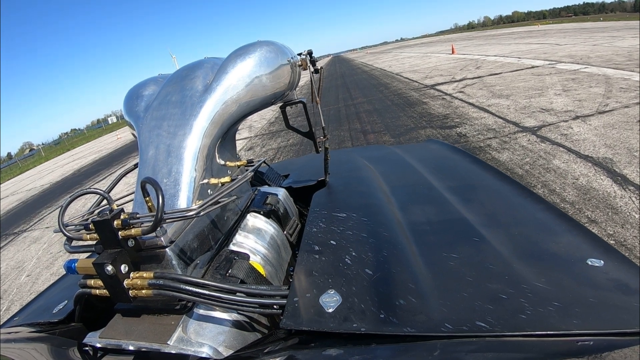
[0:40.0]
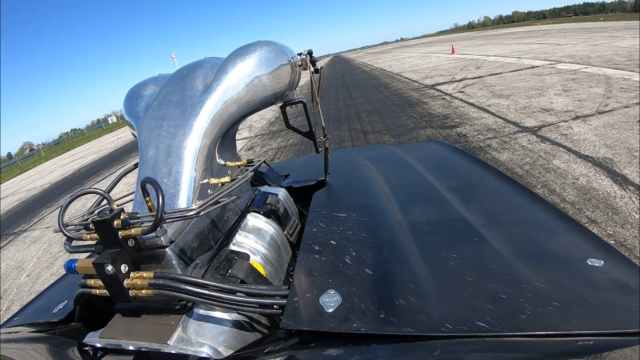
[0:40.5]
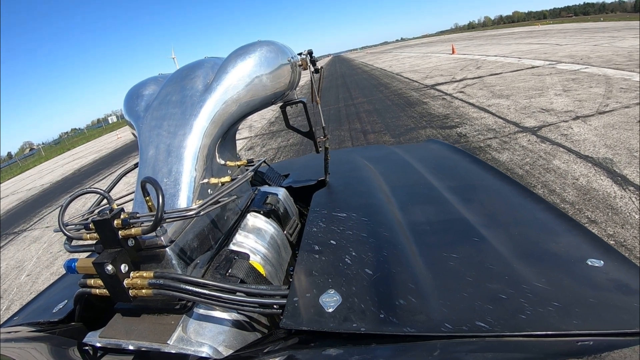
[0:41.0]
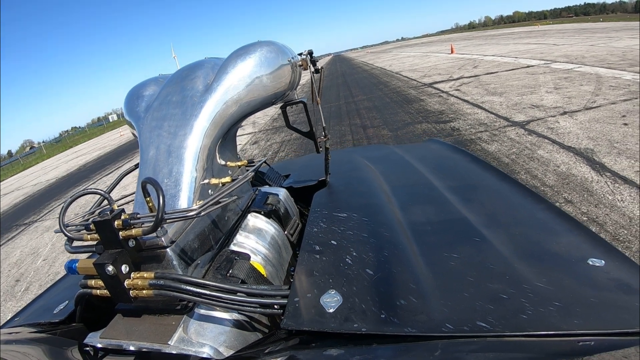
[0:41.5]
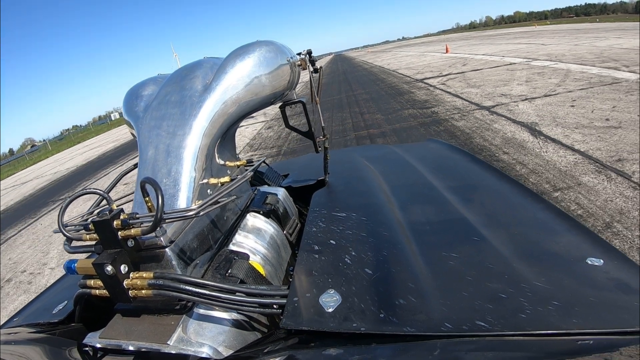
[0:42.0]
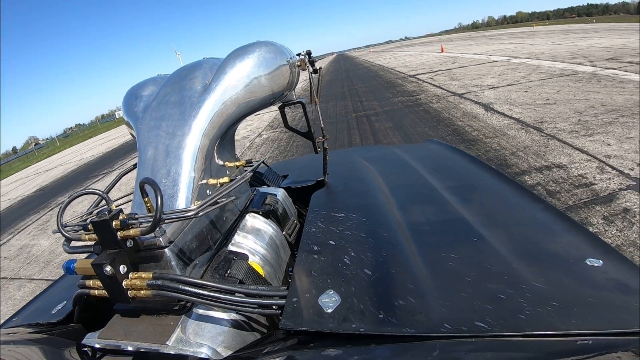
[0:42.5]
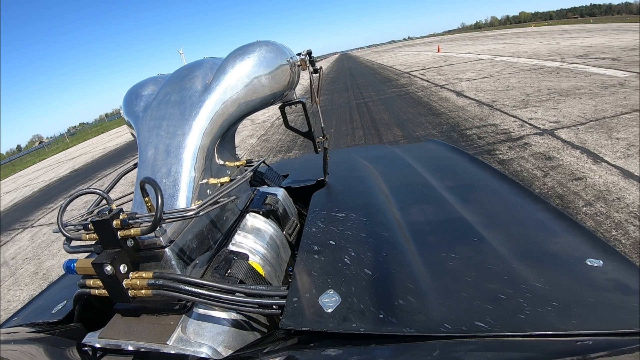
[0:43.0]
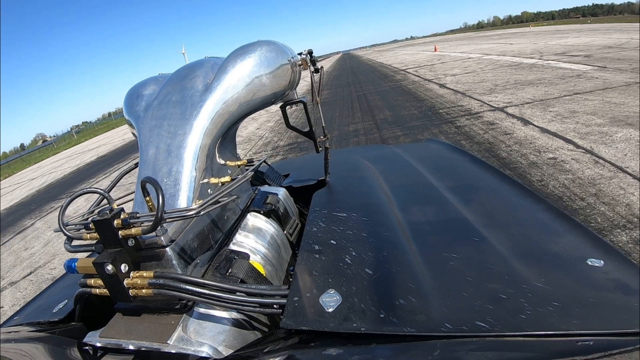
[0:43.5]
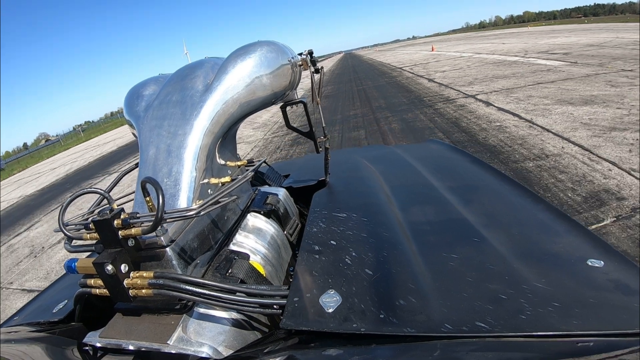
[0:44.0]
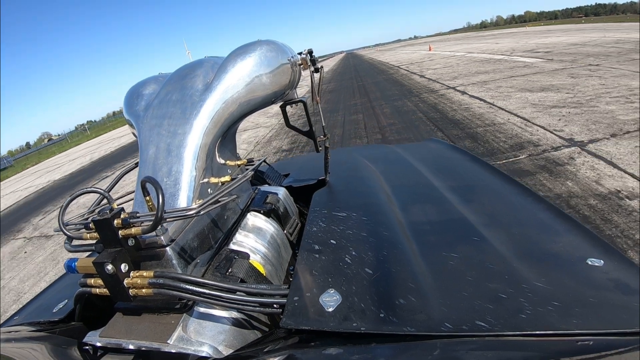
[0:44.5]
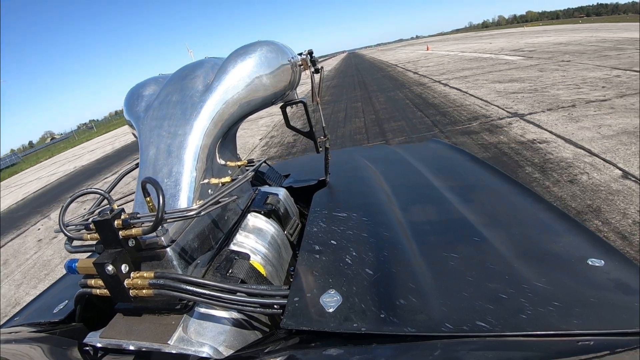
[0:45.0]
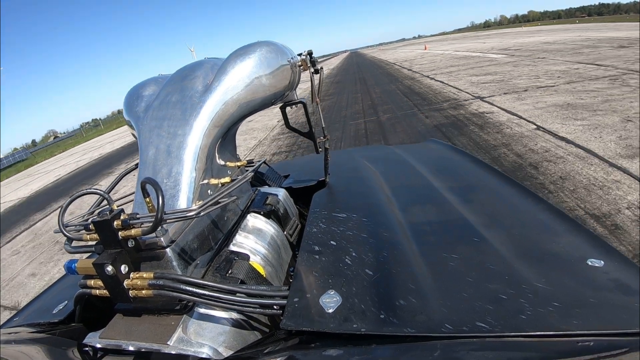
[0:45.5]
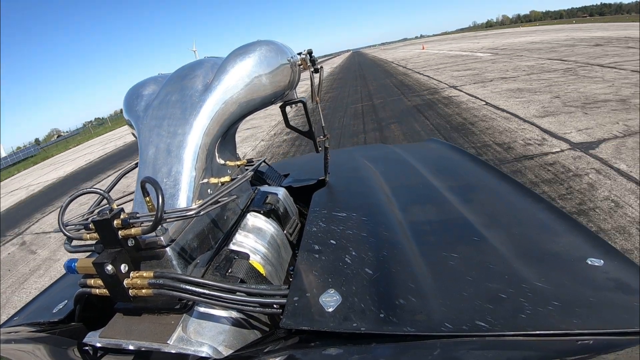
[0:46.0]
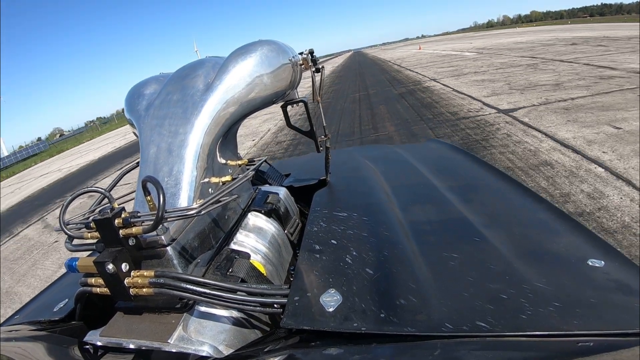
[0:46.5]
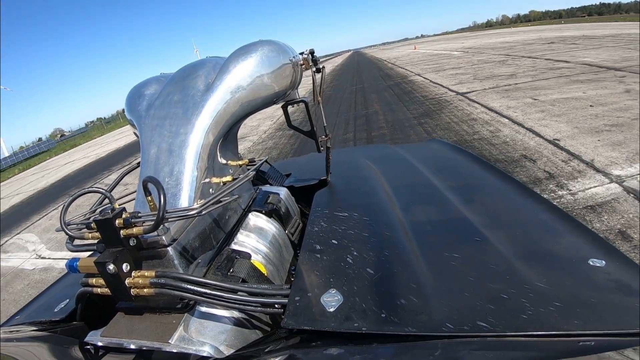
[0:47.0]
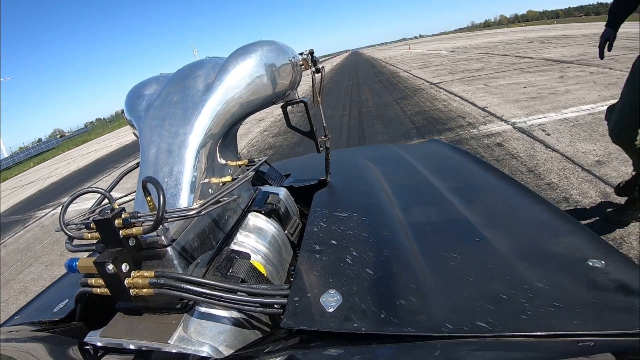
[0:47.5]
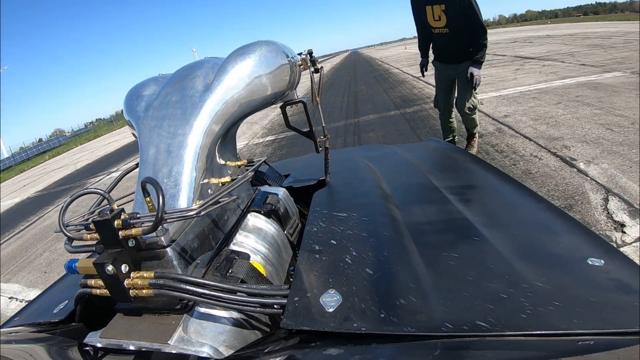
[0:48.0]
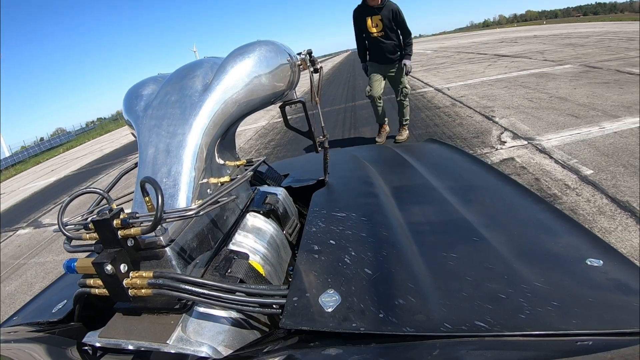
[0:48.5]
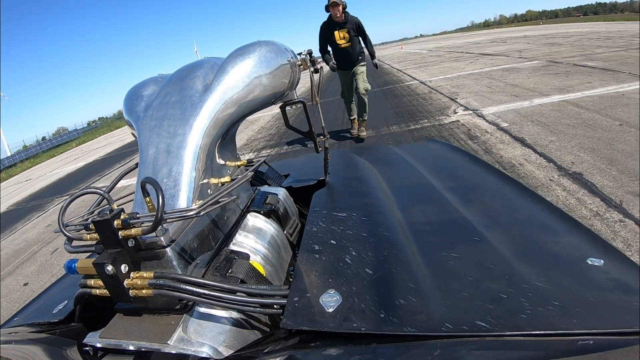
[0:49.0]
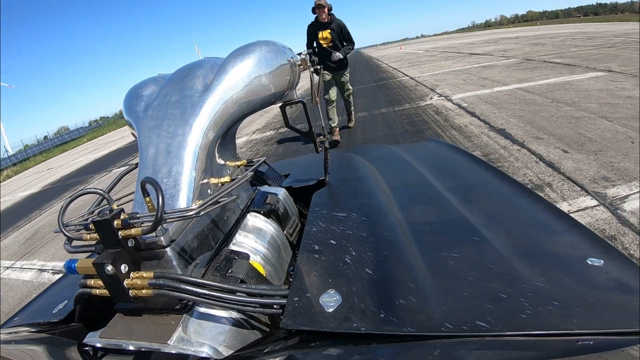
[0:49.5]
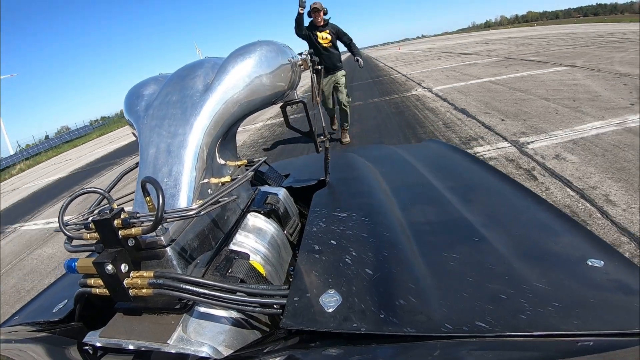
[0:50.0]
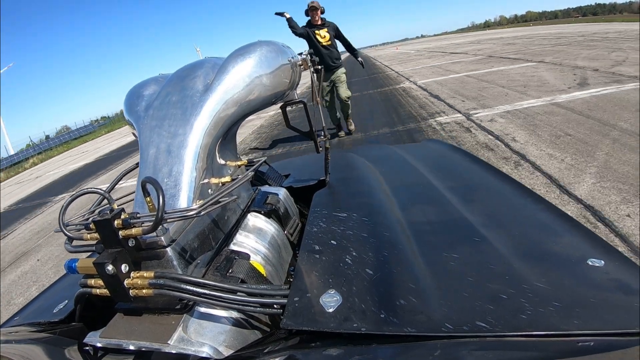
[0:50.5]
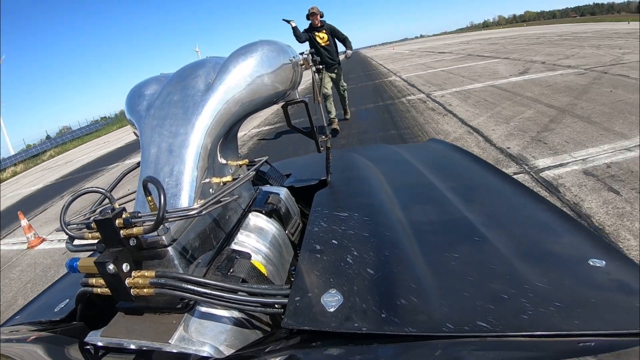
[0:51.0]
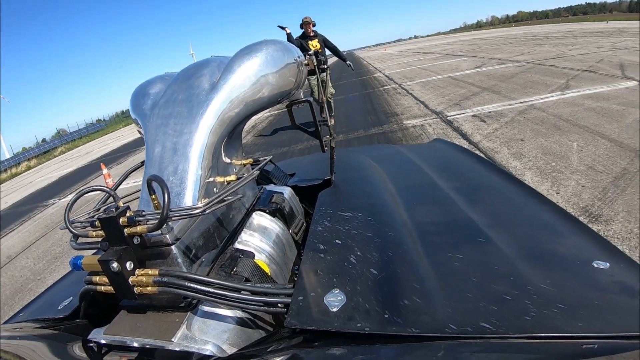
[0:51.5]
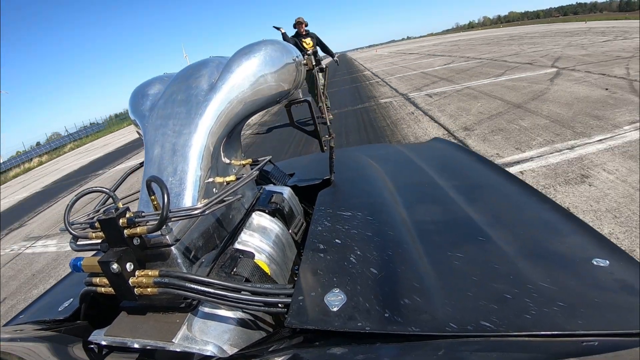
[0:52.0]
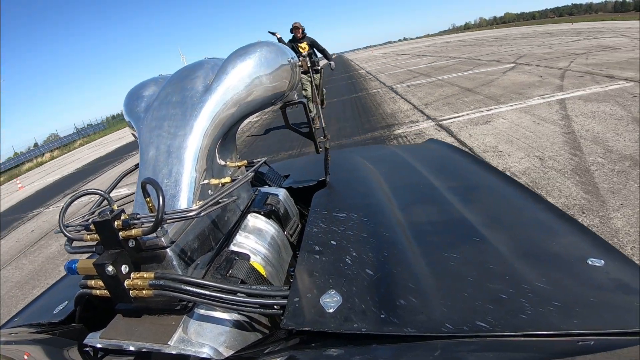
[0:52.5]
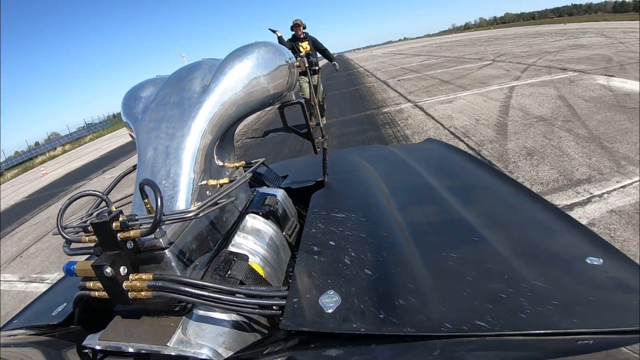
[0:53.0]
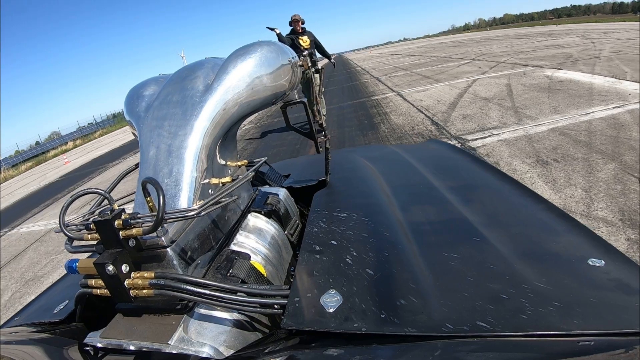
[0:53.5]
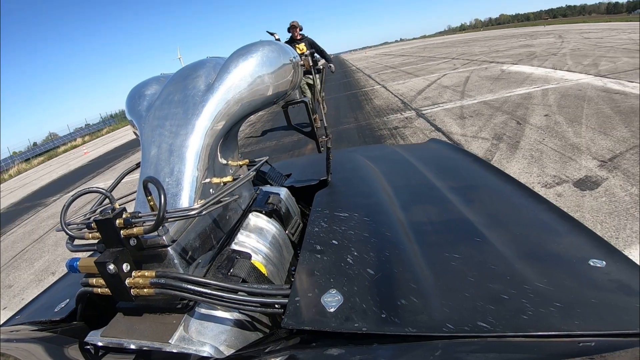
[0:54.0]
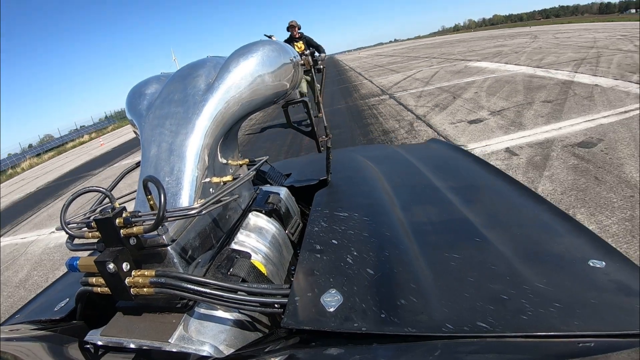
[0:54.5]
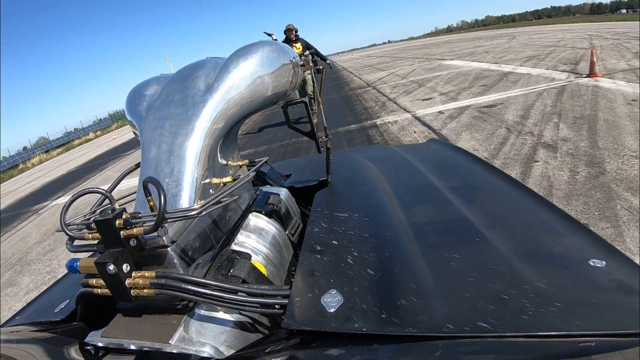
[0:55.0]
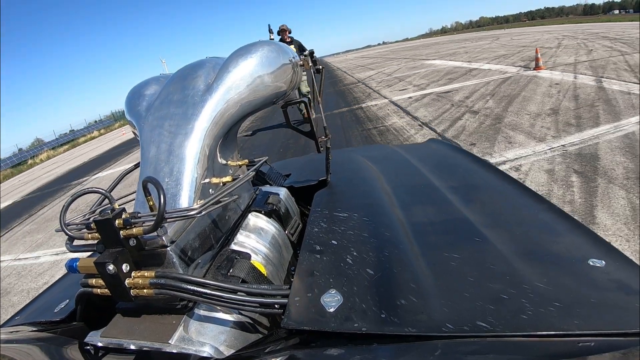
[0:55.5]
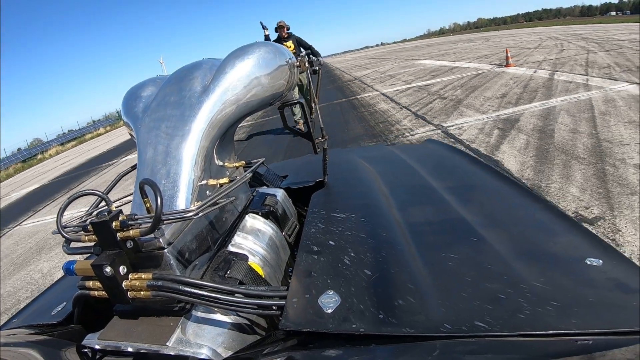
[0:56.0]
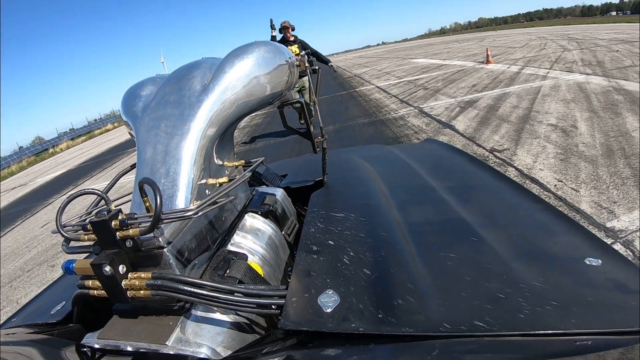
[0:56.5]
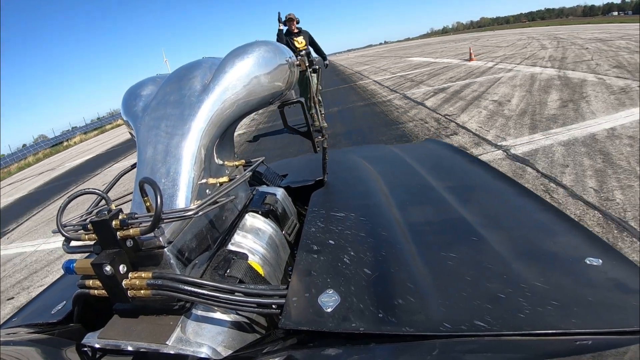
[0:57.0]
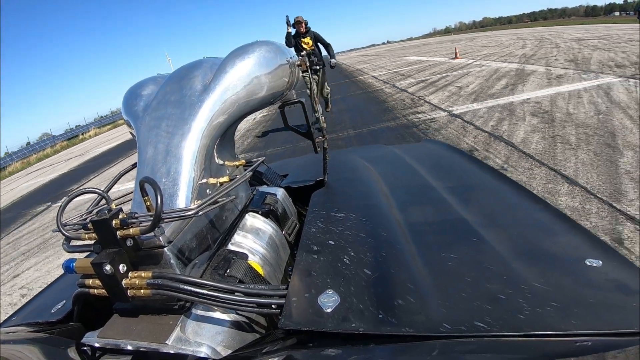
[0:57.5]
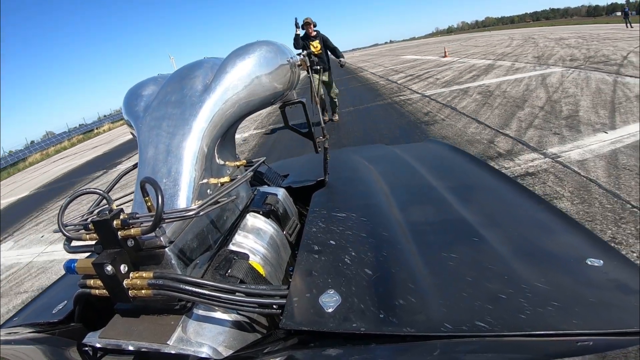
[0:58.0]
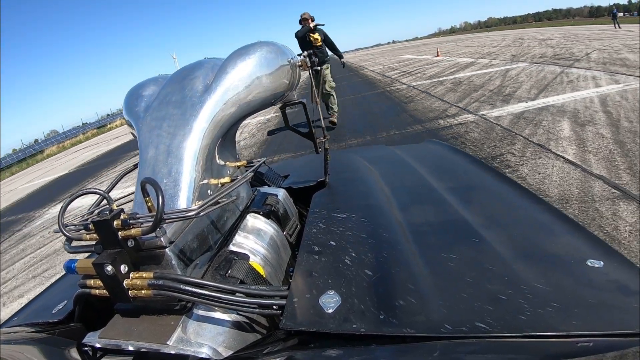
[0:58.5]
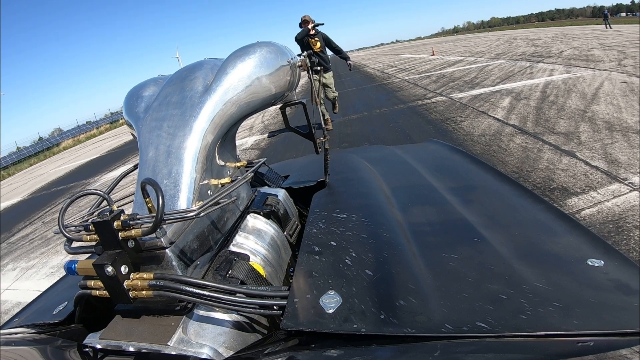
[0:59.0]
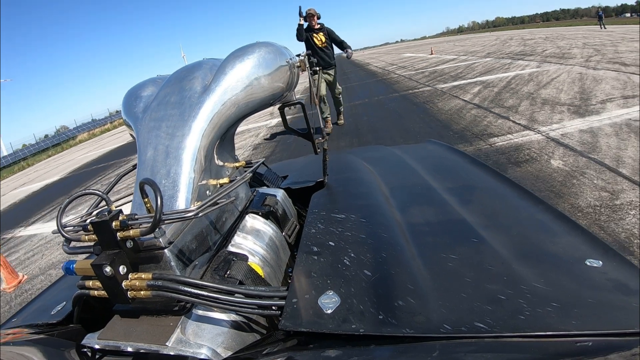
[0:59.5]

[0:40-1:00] A gray drag racing car drives backwards on a quite wide cement strip with trees on the right and left sides. As it backs up, a man runs after it, waving something in his hand right and left. He has headgear on, a jacket with yellow lettering, and tan pants. One man is off to the right in the distance. The car does not seem to be going very fast; it seems to simply be backing up. On top of the hood is a silver engine with a lot of wires sticking in and out of it. An orange cone is in the distance. The cement strip is gray and has cracks in it.